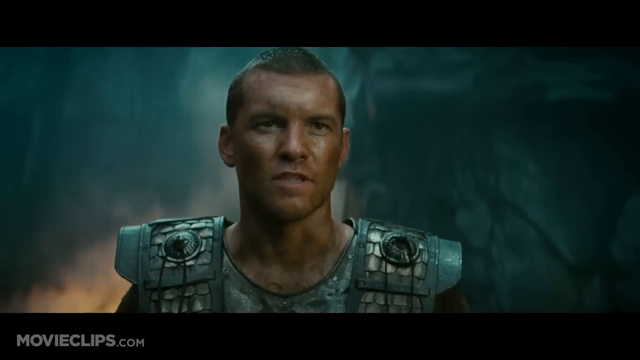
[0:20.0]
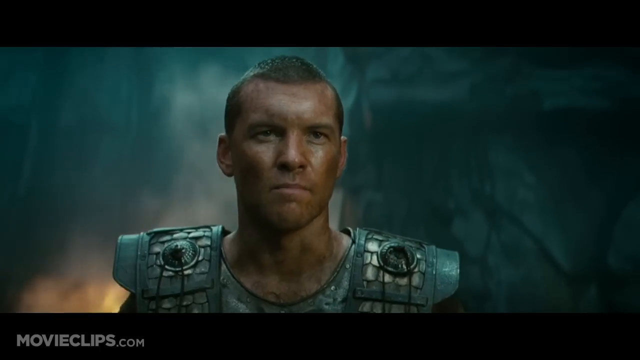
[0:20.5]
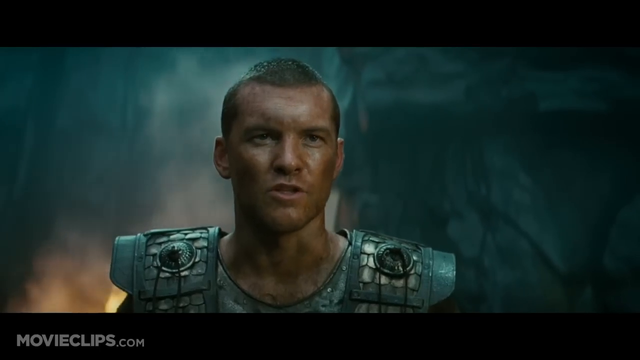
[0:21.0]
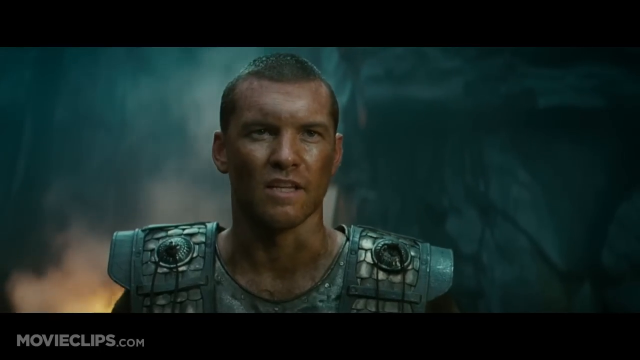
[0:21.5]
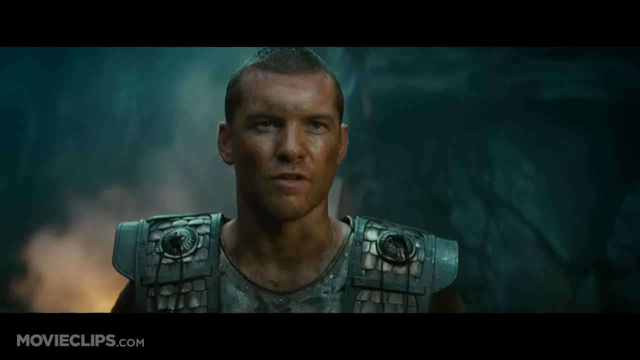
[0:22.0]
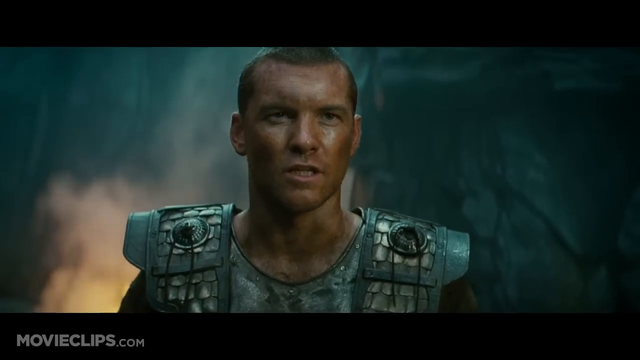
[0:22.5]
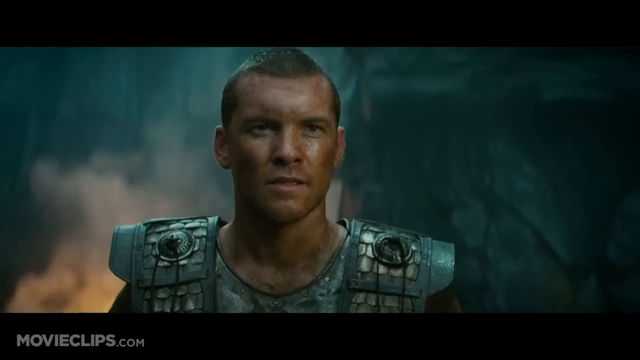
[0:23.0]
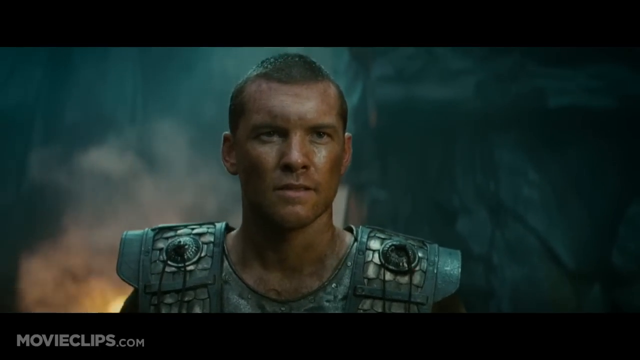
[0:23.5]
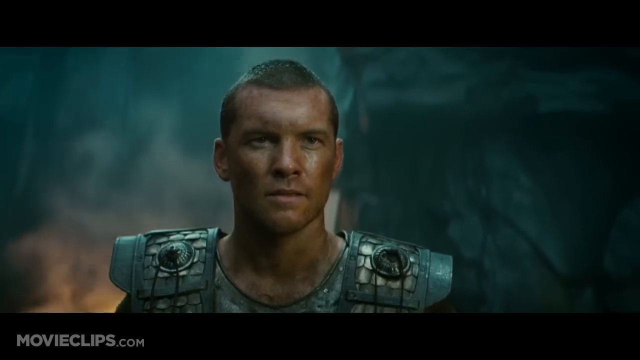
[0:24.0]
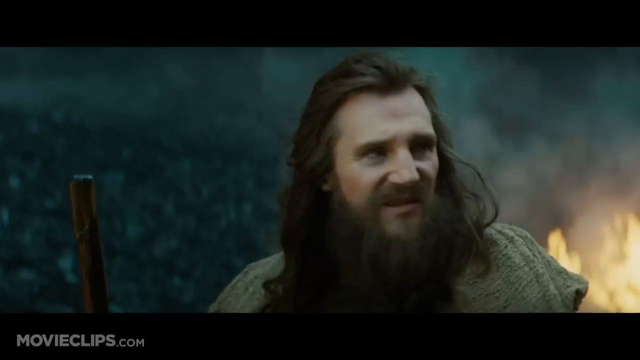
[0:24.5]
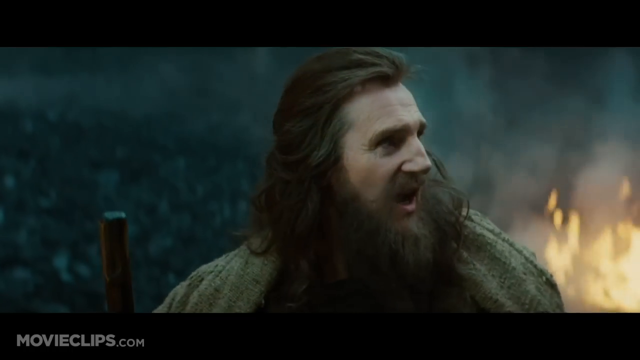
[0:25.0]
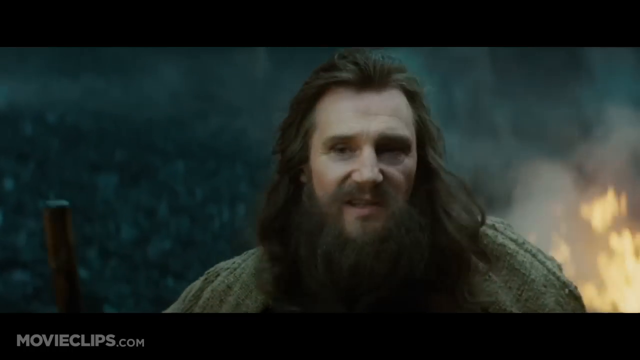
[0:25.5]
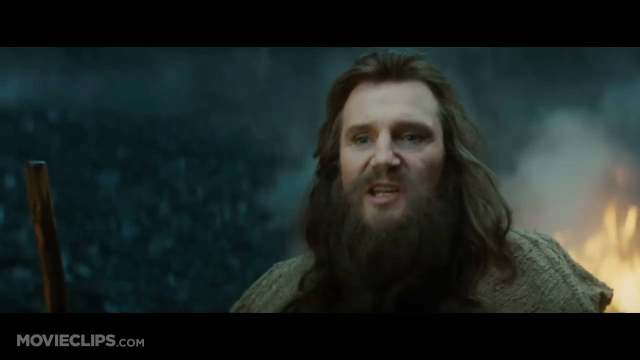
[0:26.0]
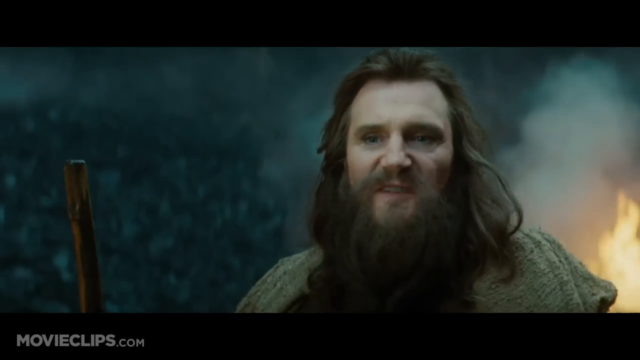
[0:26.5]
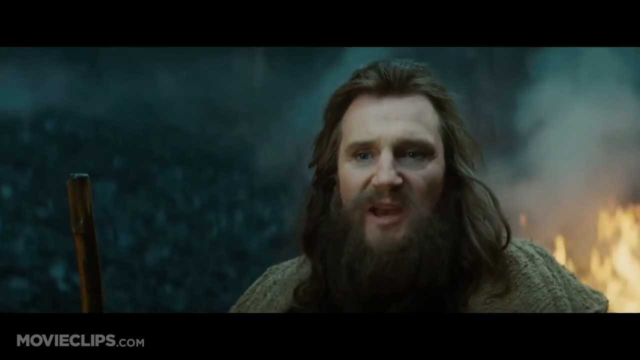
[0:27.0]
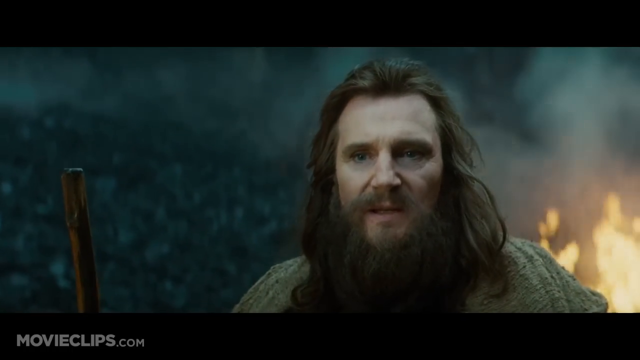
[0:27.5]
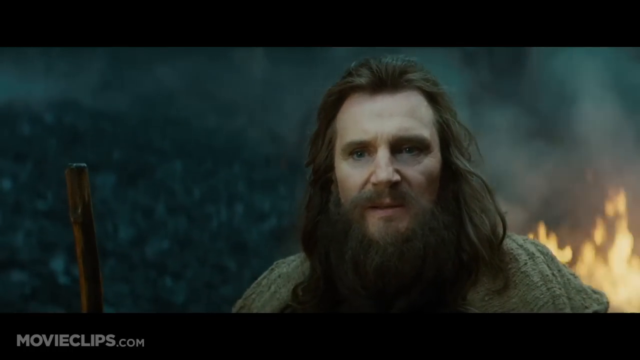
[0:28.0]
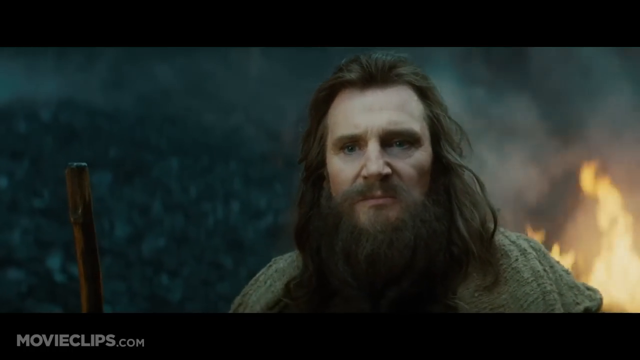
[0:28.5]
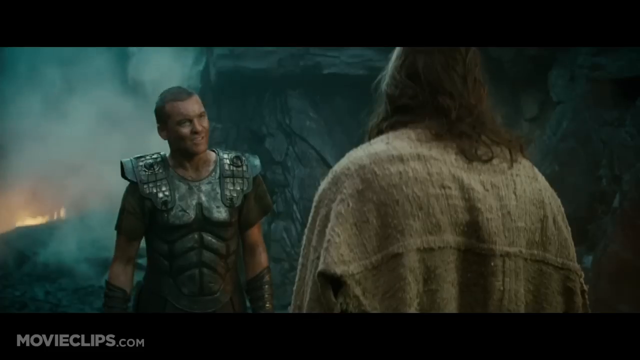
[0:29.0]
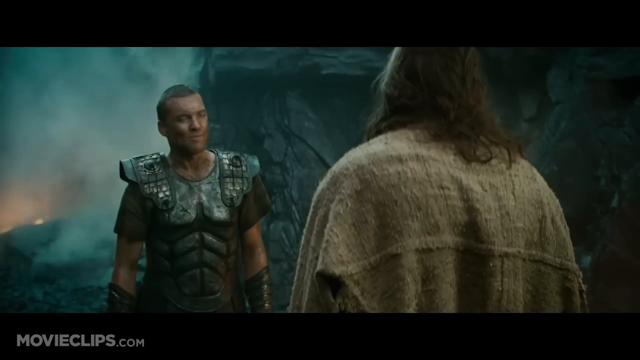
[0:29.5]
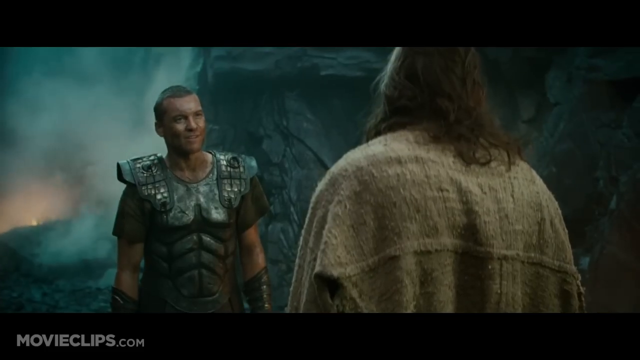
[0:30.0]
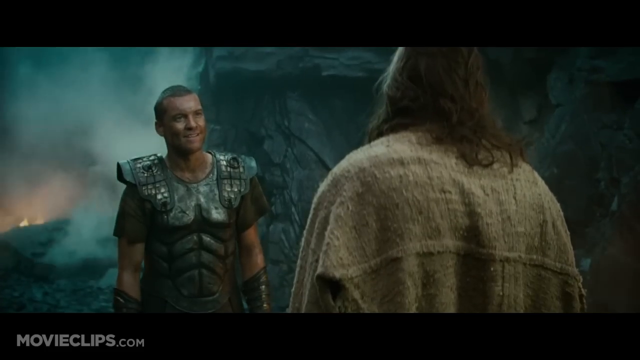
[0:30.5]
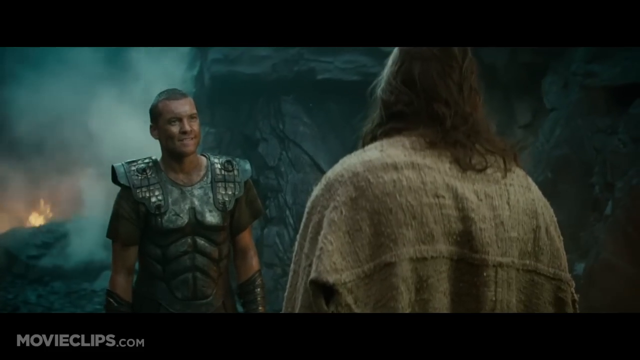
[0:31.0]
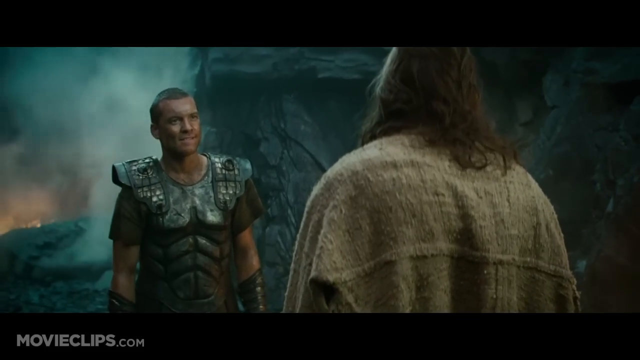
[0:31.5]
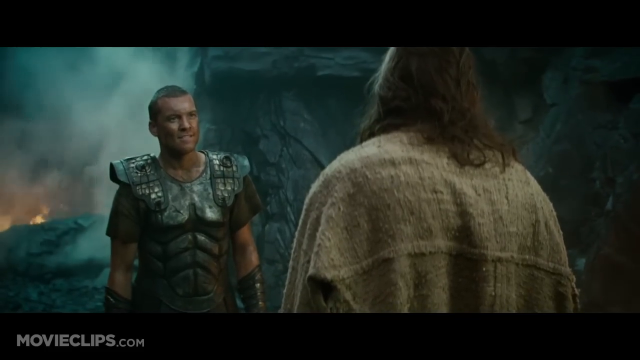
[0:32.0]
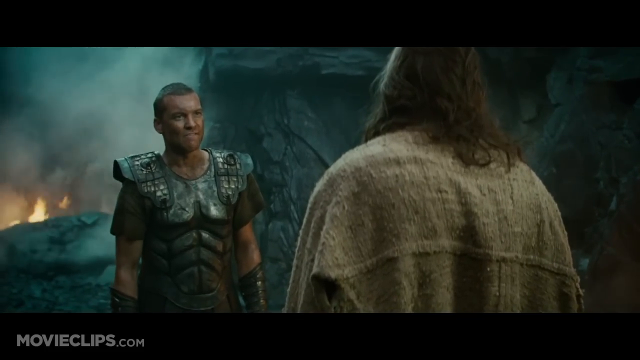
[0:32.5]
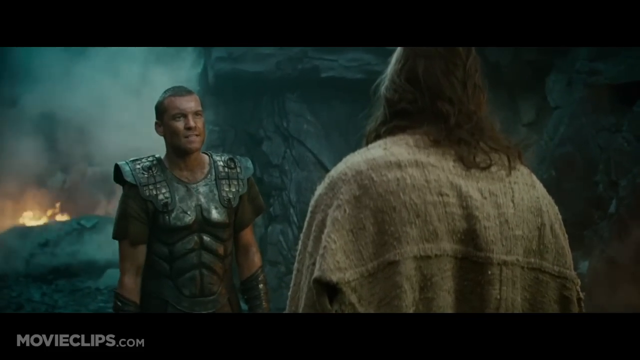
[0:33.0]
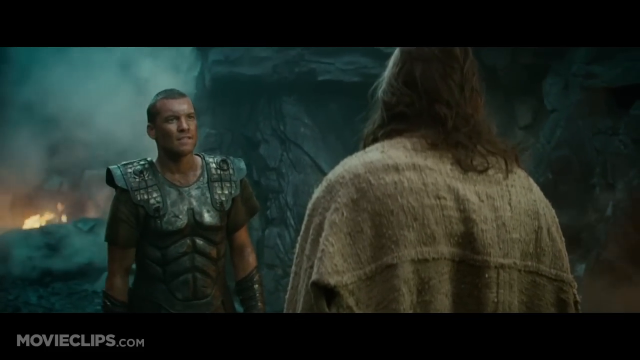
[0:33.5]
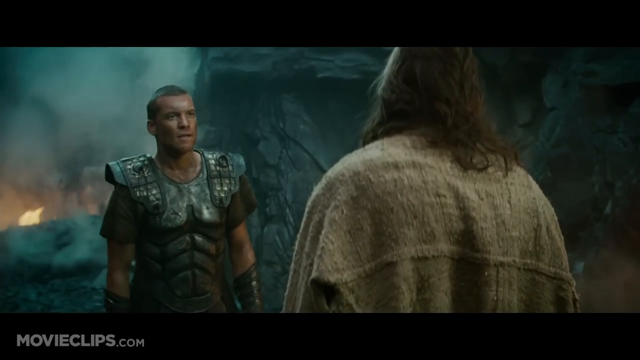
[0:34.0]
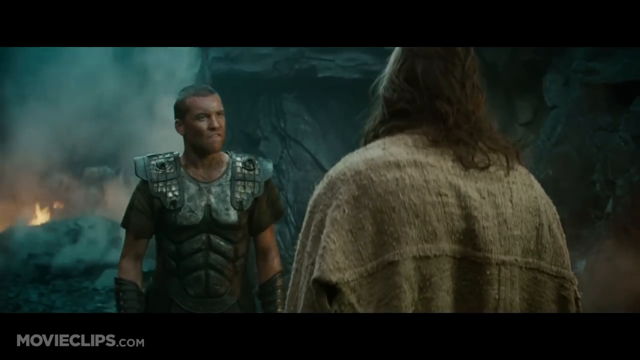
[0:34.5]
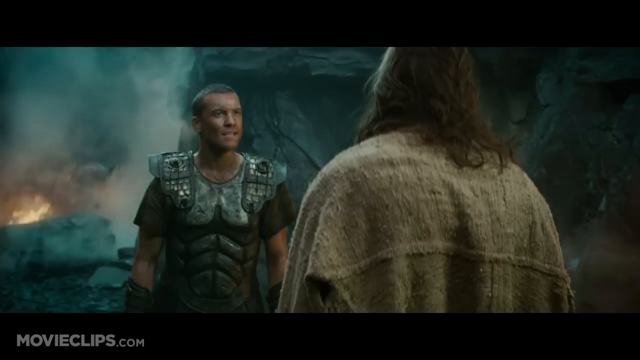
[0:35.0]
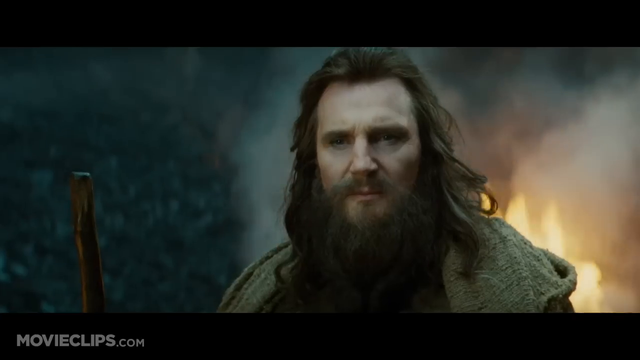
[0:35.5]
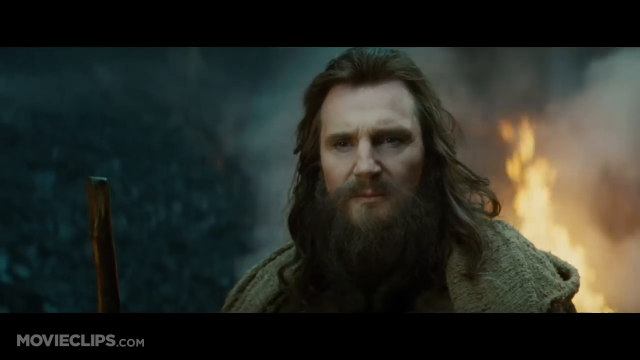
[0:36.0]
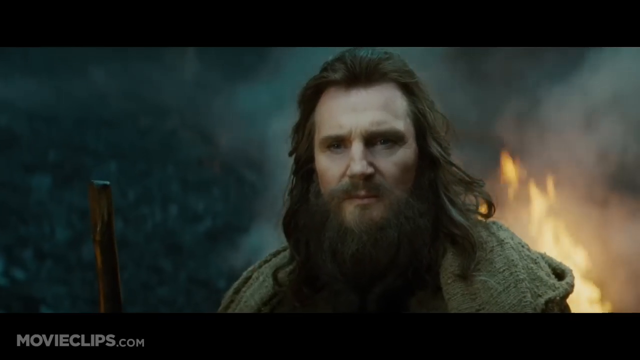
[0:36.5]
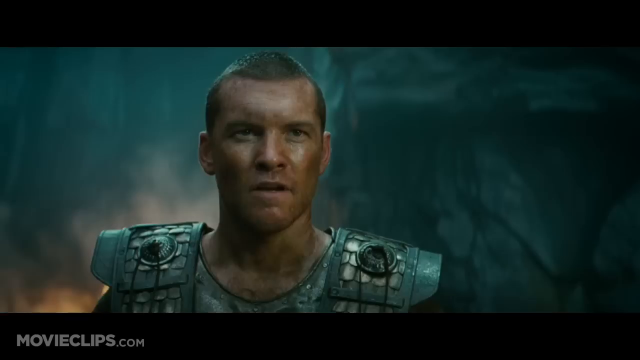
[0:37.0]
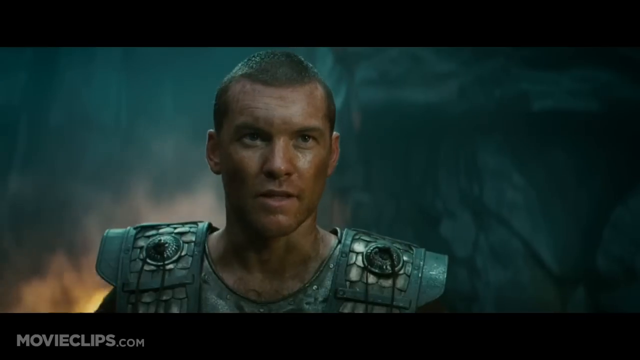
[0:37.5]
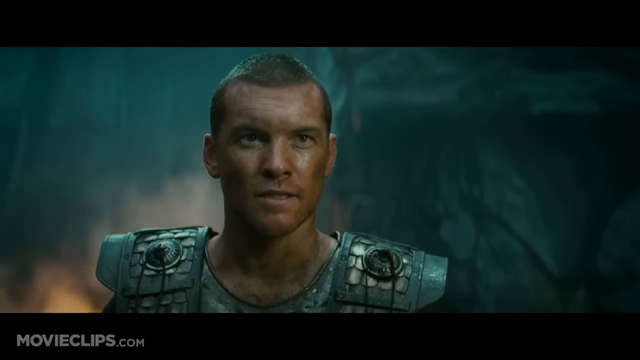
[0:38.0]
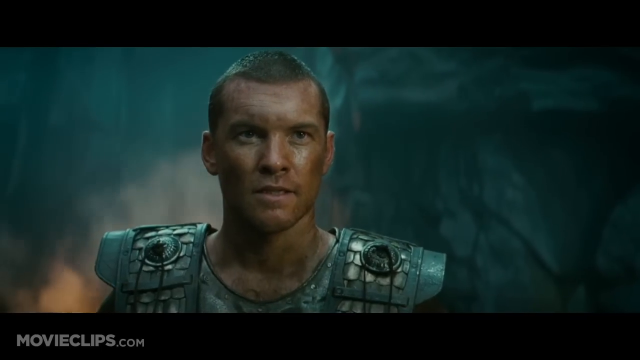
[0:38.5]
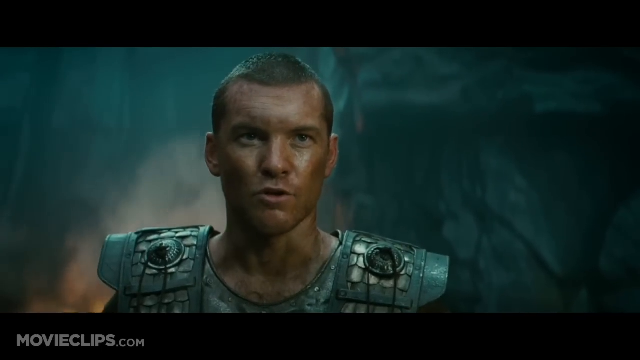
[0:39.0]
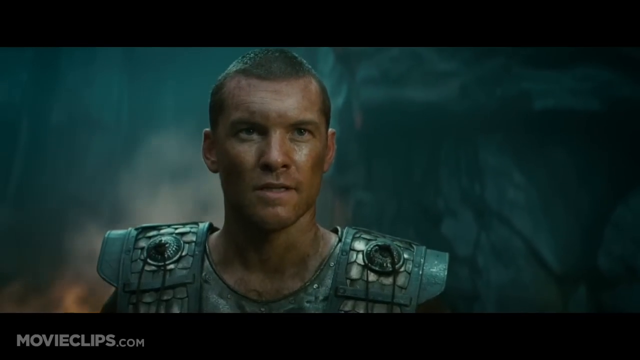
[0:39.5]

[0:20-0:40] The two men keep arguing and challenging each other, with fire and smoke in the background, which suggests there was probably a fight between two armies and only these two are left. As they speak, they move a little closer to each other with set faces; the argument looks like it will end in a fight. One wears armor and appears to be part of the other army, while the other, who has long hair, is in normal clothing. The man in armor gives a laugh as they continue challenging each other, and the fire keeps burning.